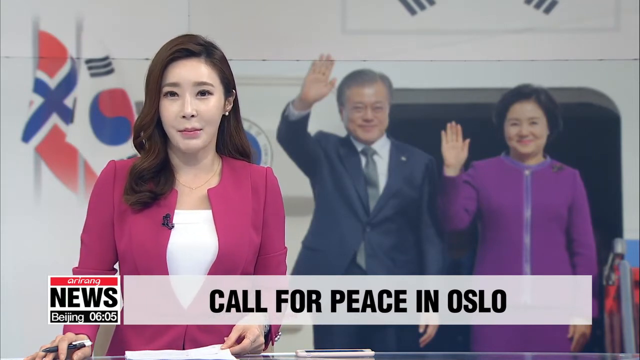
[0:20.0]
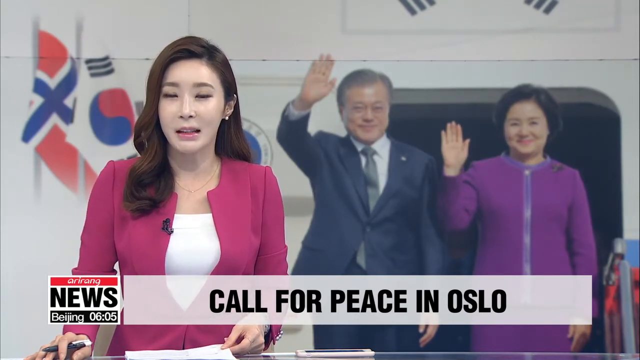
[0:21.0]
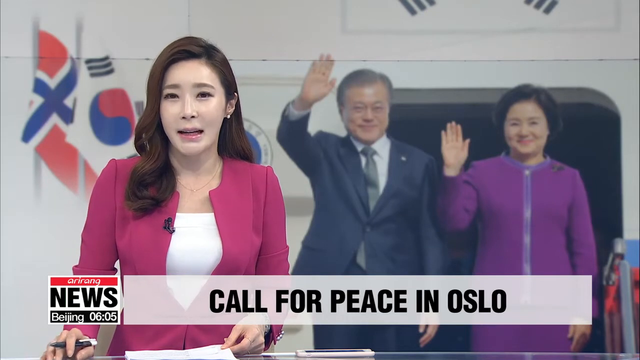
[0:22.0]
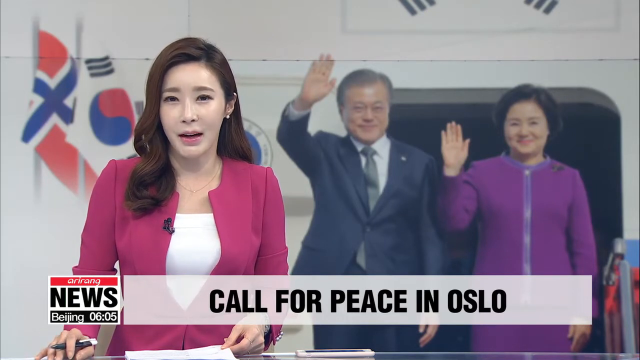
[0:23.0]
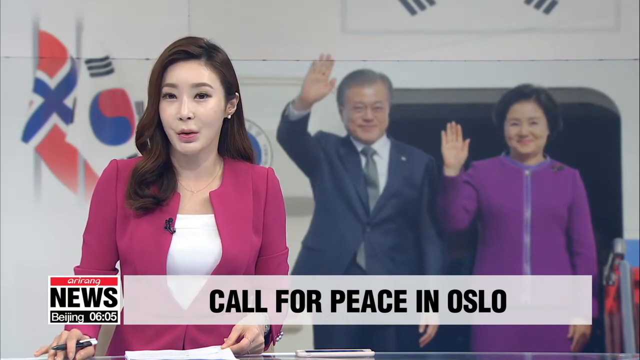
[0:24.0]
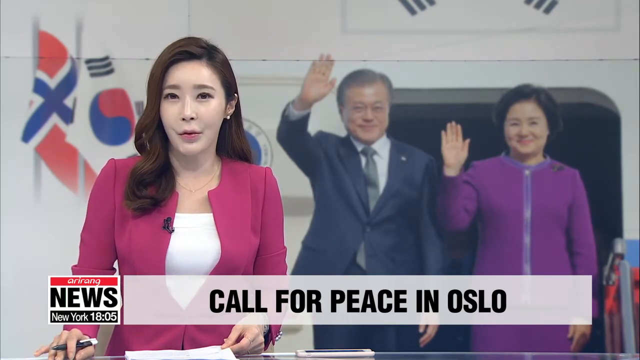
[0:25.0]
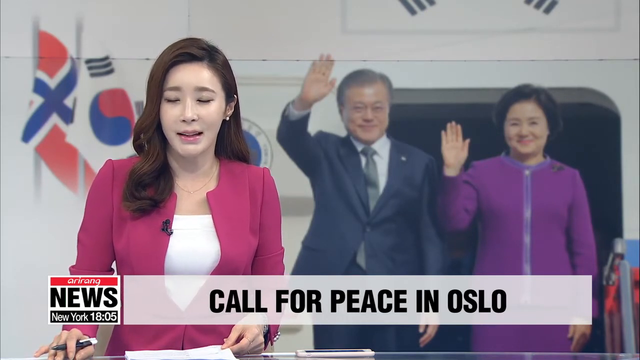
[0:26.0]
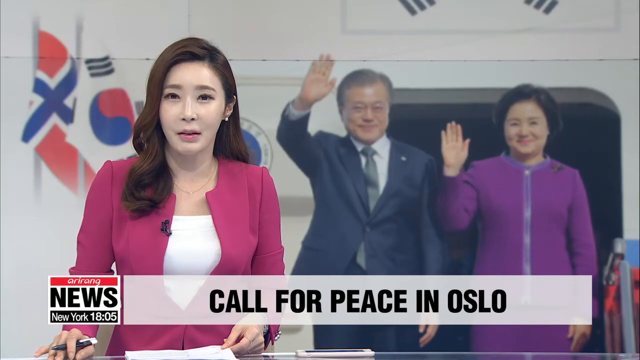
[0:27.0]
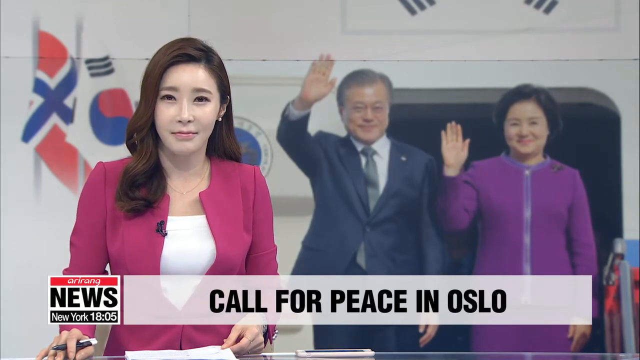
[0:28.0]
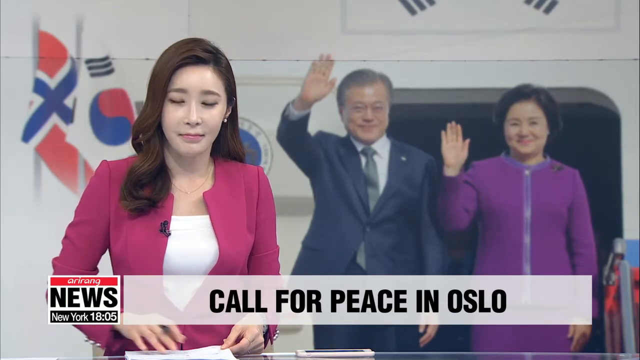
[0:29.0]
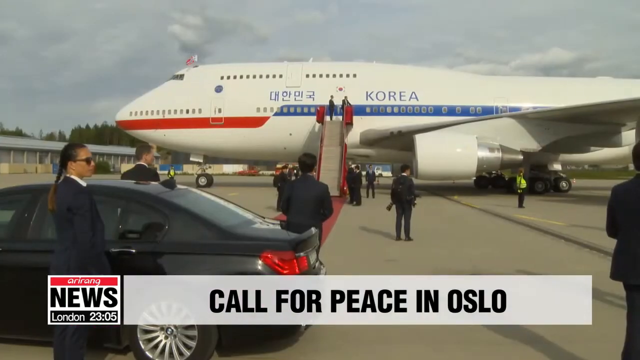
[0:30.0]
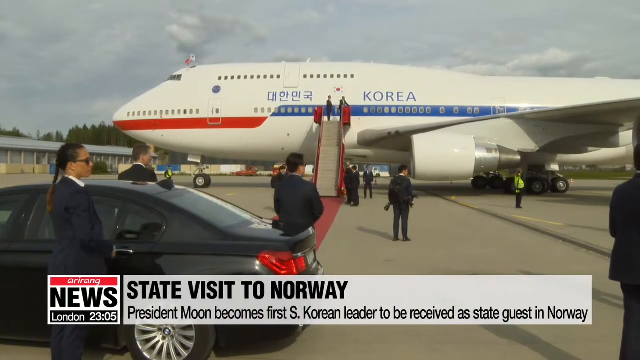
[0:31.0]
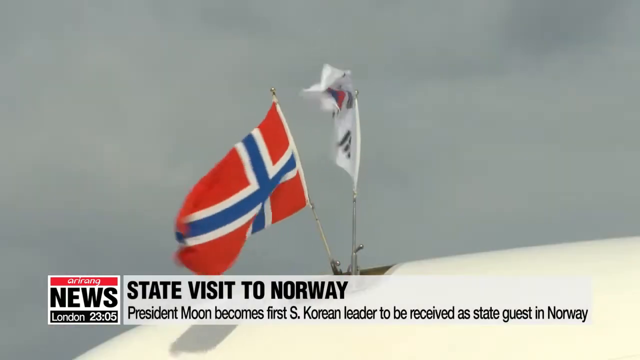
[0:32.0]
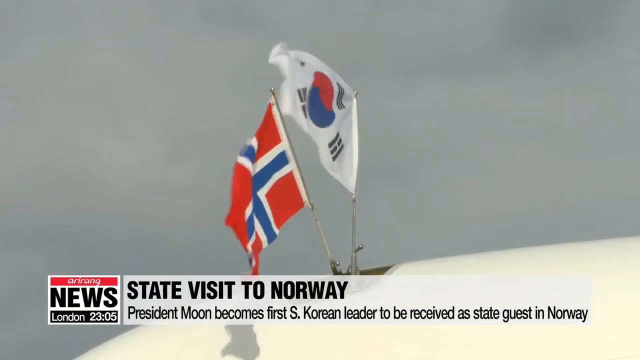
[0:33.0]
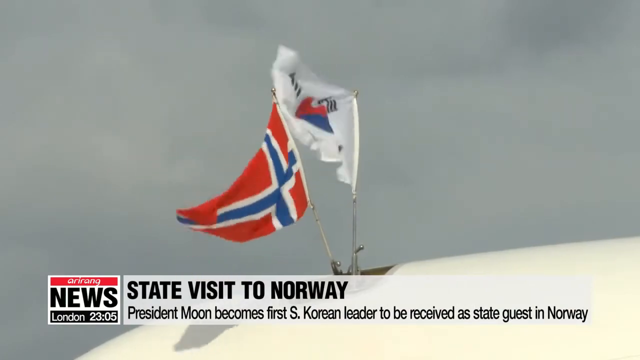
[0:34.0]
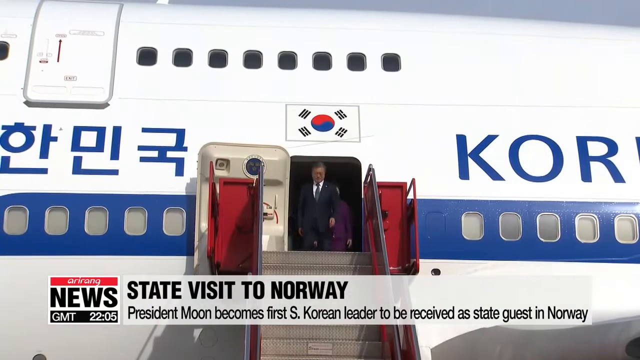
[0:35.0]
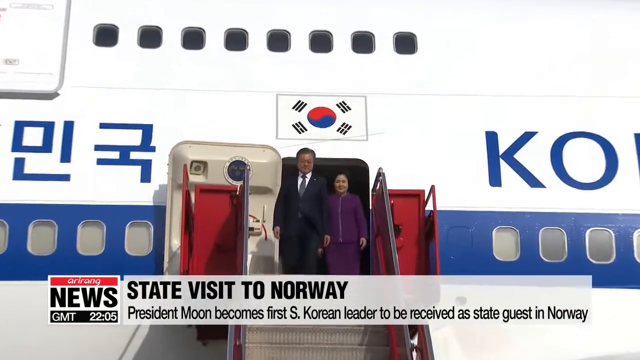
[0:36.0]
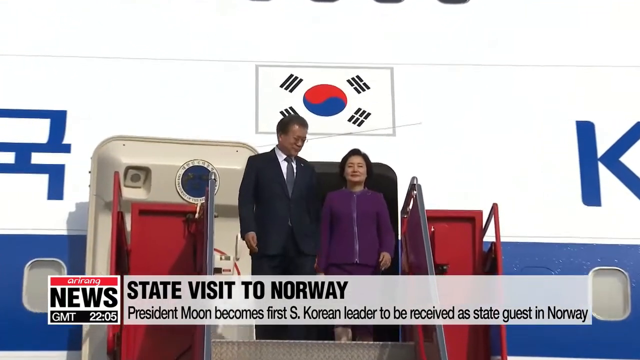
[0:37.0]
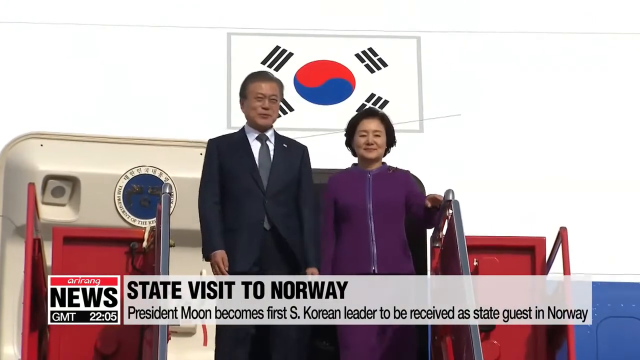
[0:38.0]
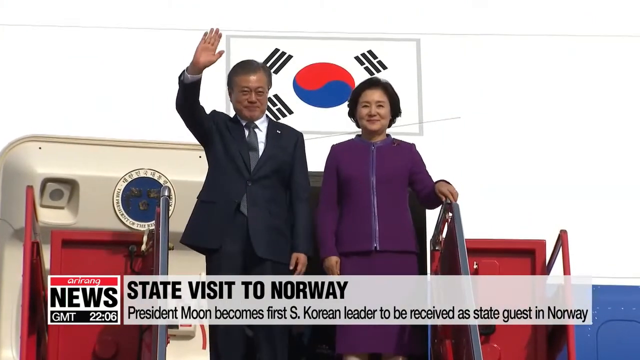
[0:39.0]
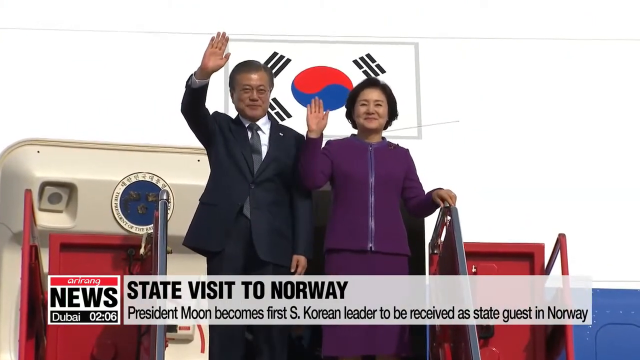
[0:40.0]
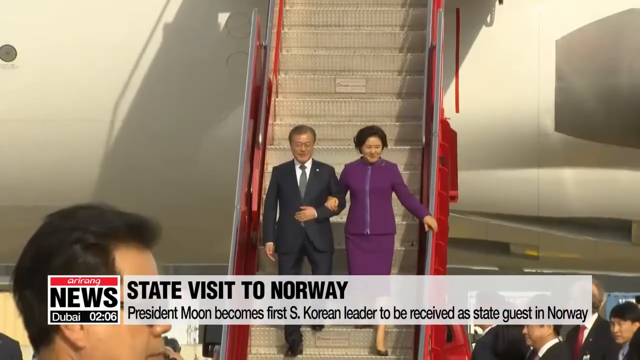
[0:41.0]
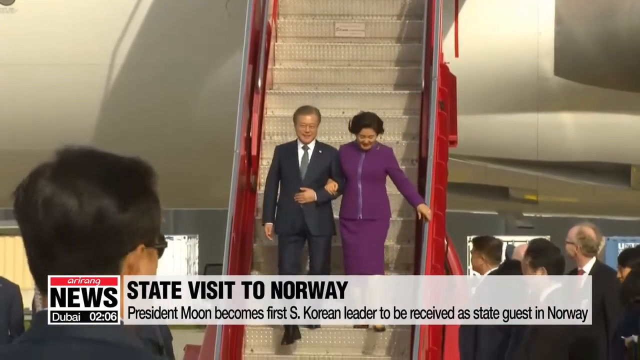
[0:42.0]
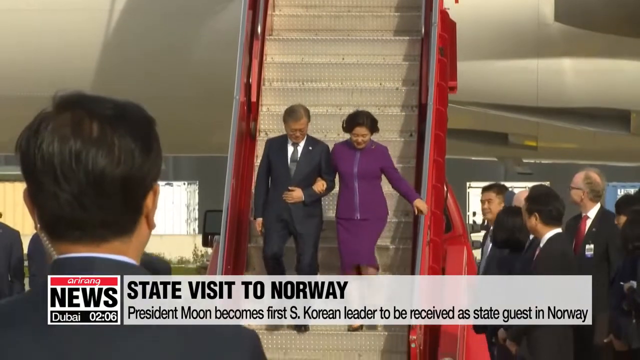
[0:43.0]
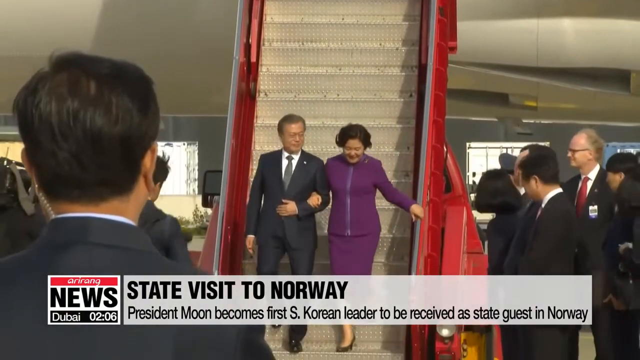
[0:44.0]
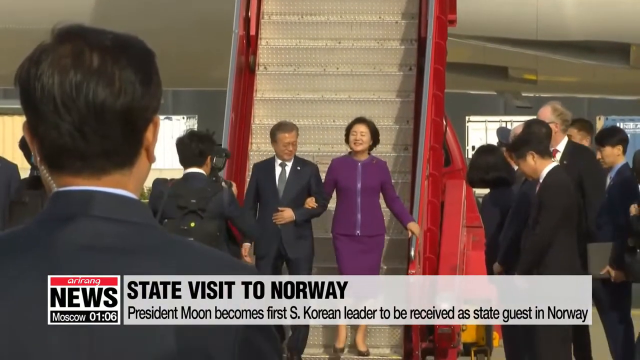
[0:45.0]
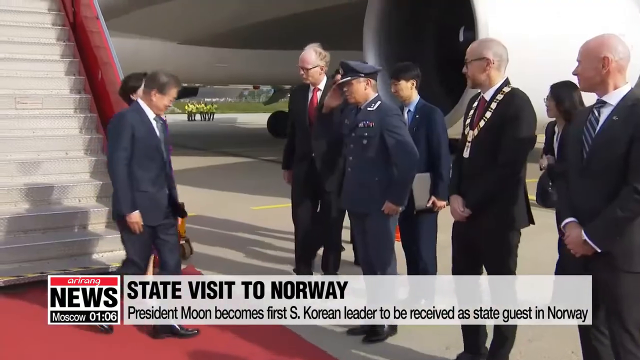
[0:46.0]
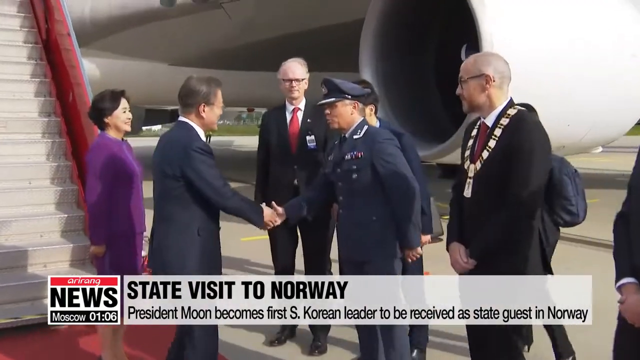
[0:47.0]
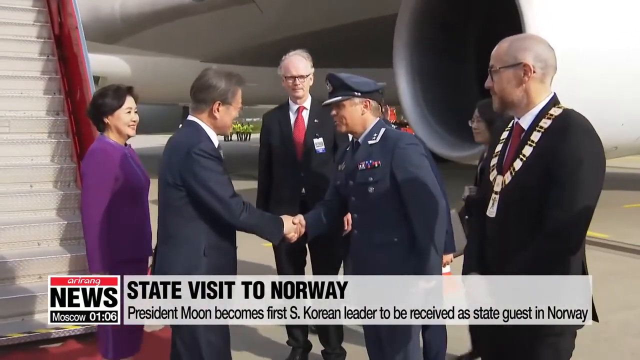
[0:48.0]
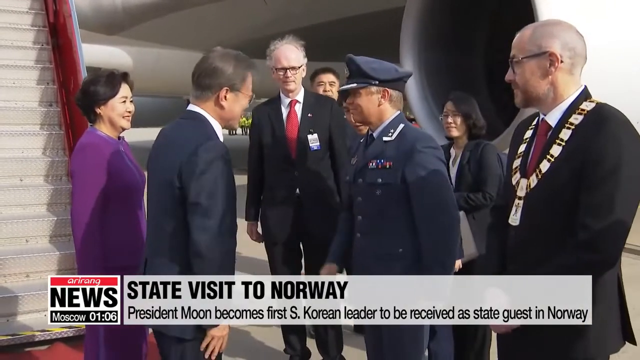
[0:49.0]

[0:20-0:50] The broadcast continues, with "News London" visible and text reading "state visits to Norway." A plane is shown, and President Moon comes out waving his hands at the masses. He and his wife are received as guests in Norway, and people who have come to welcome them at the airport shake hands with them. Text notes that President Moon becomes the first South Korean leader to be received as a state guest in Norway.